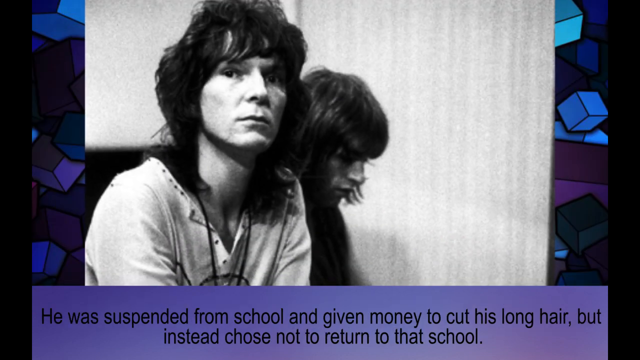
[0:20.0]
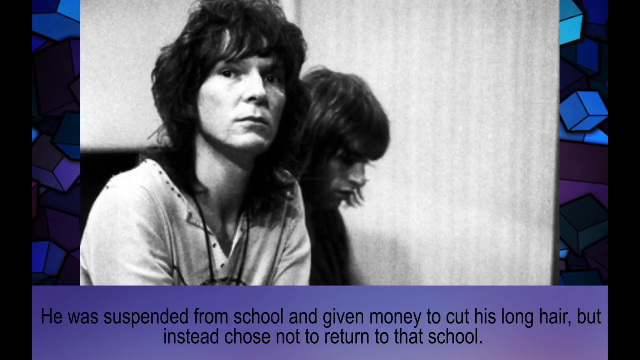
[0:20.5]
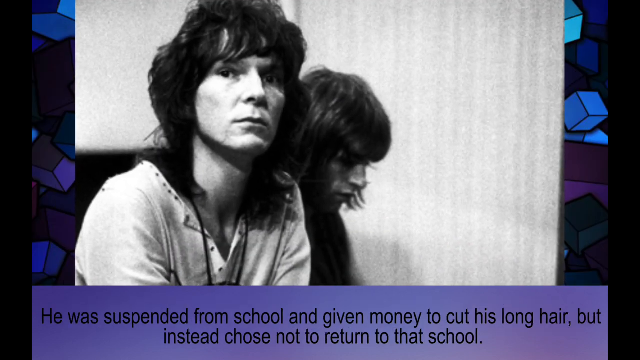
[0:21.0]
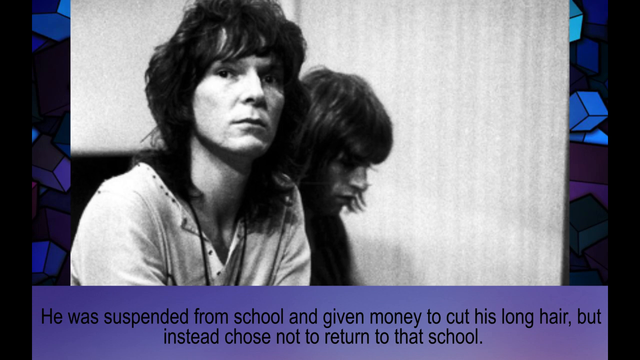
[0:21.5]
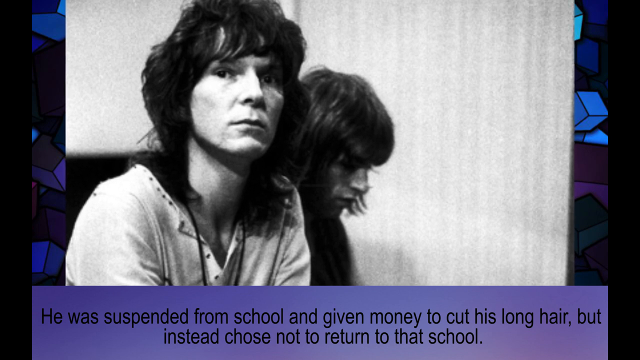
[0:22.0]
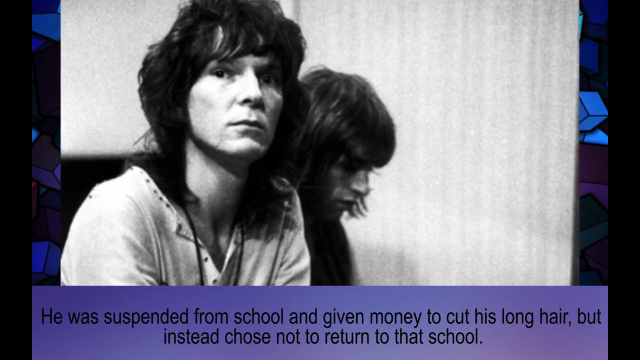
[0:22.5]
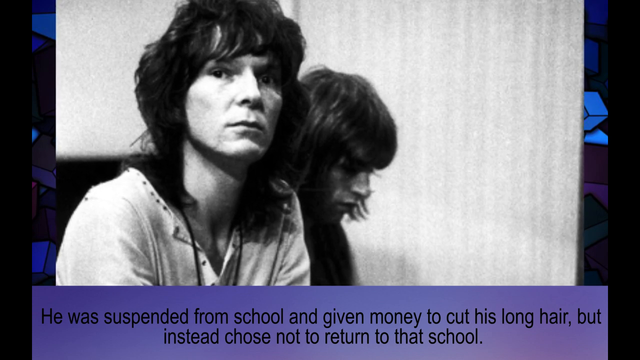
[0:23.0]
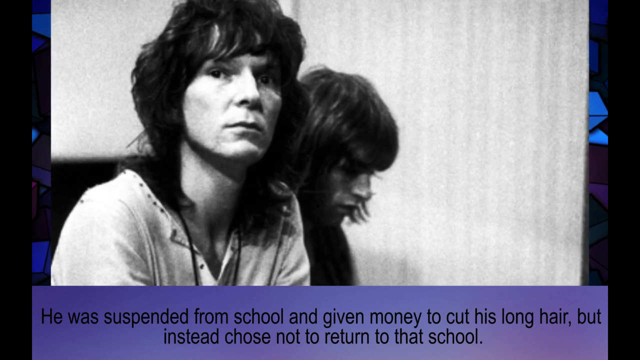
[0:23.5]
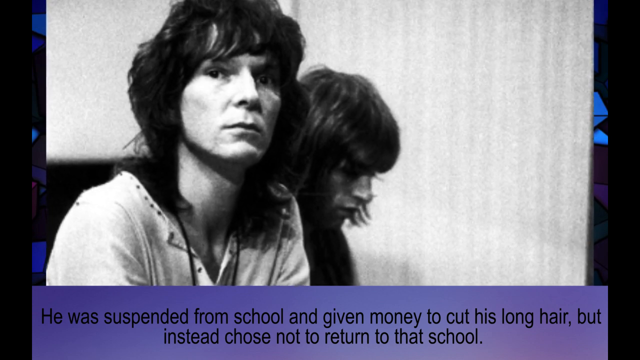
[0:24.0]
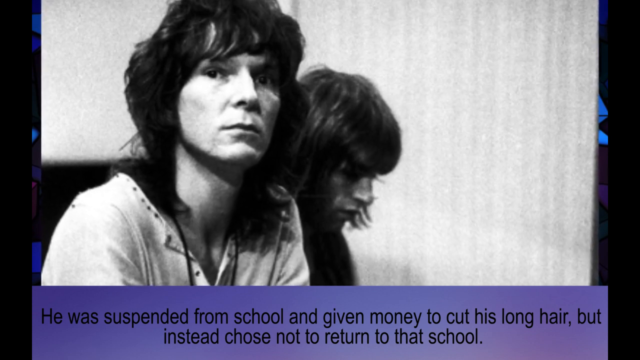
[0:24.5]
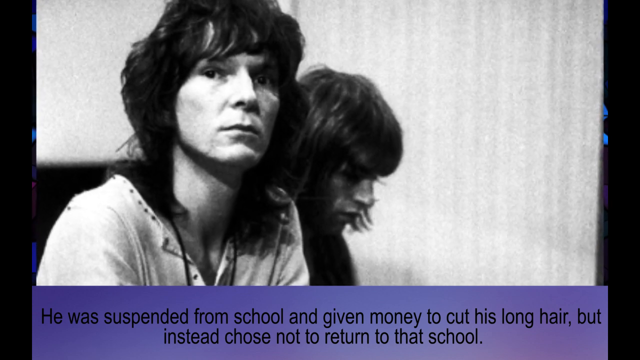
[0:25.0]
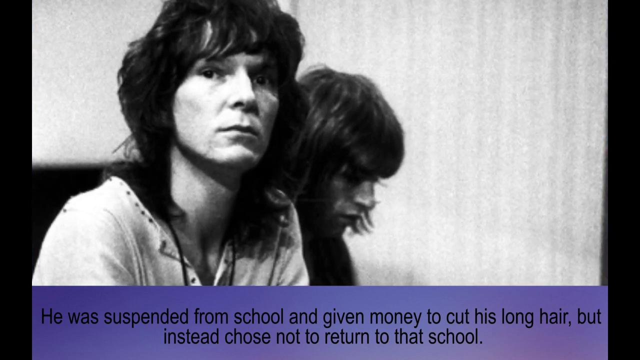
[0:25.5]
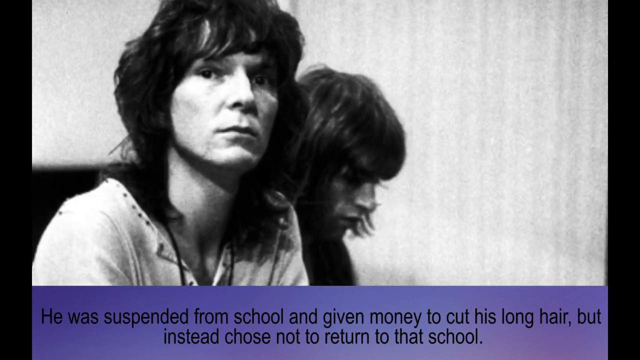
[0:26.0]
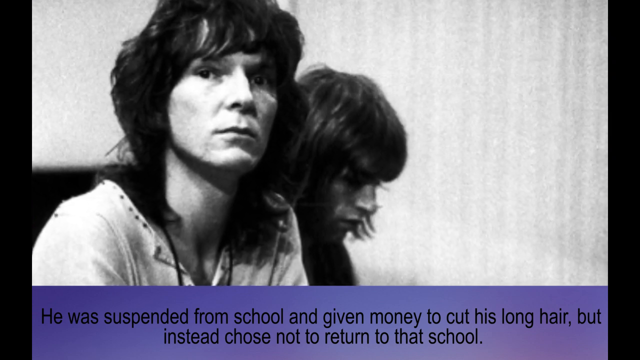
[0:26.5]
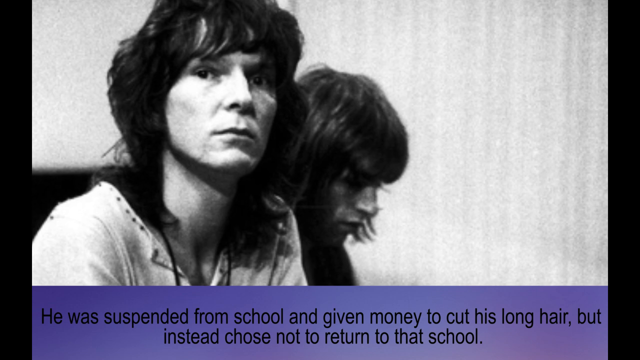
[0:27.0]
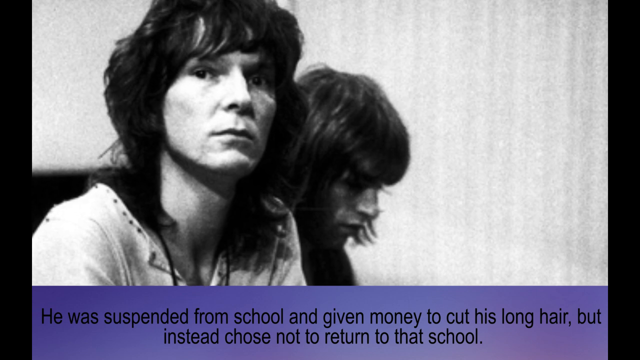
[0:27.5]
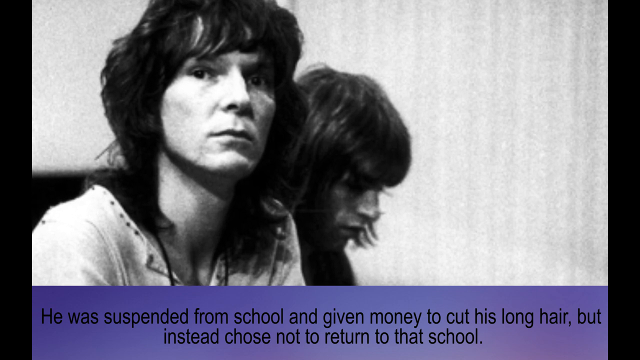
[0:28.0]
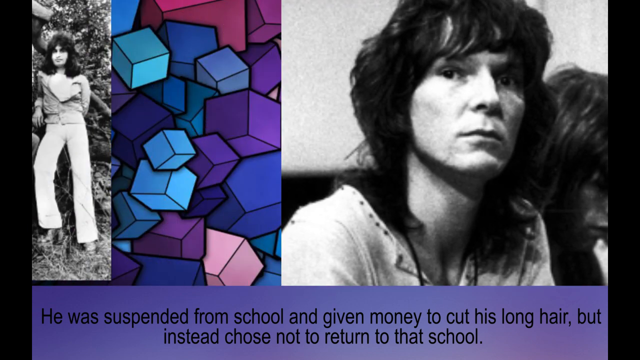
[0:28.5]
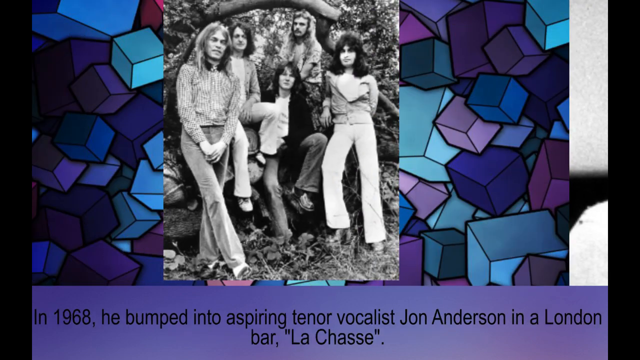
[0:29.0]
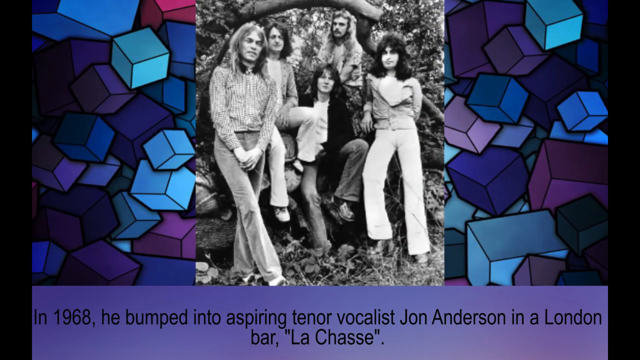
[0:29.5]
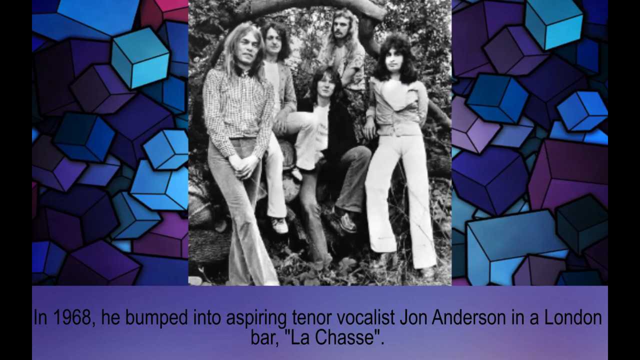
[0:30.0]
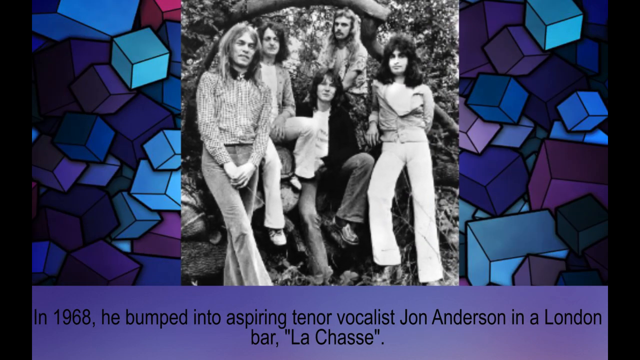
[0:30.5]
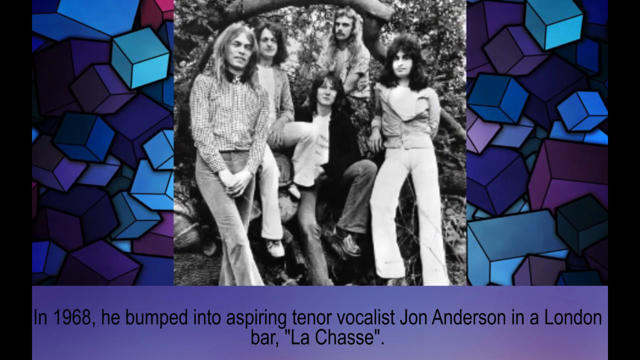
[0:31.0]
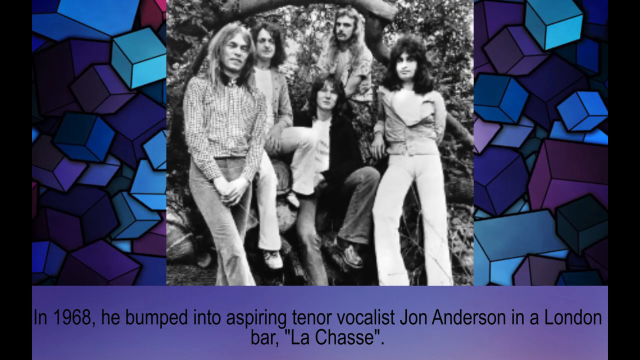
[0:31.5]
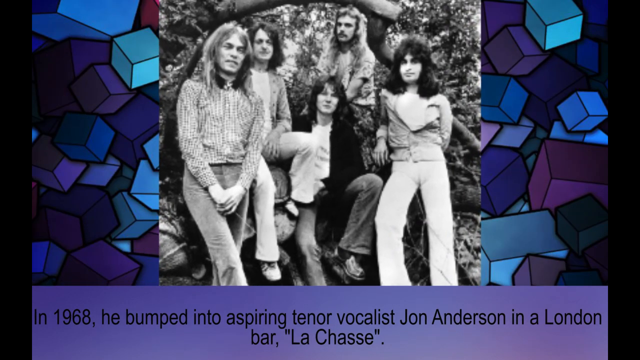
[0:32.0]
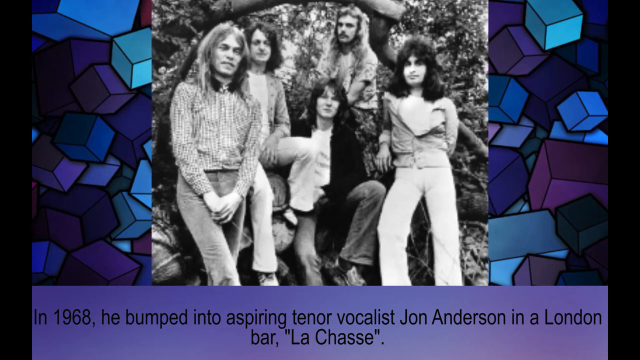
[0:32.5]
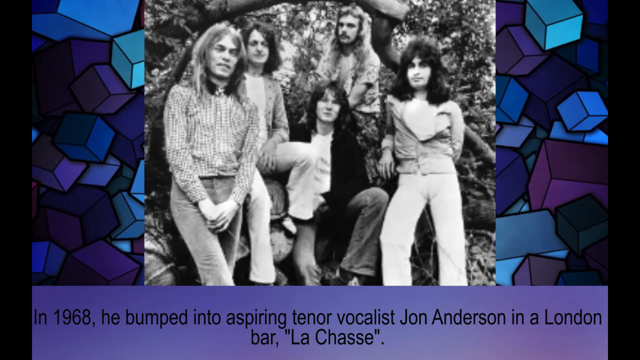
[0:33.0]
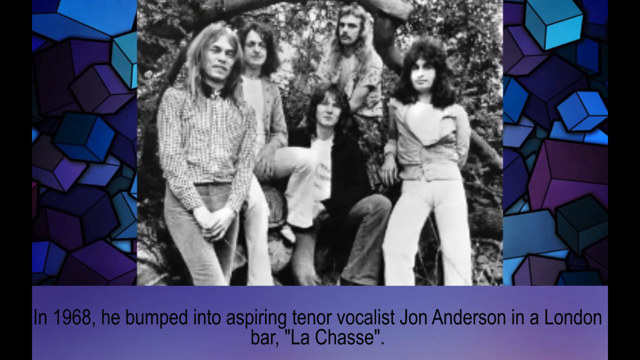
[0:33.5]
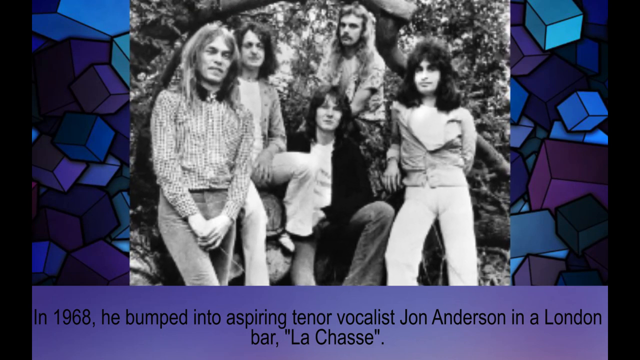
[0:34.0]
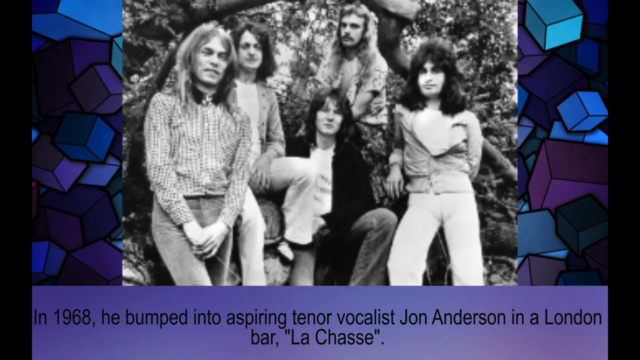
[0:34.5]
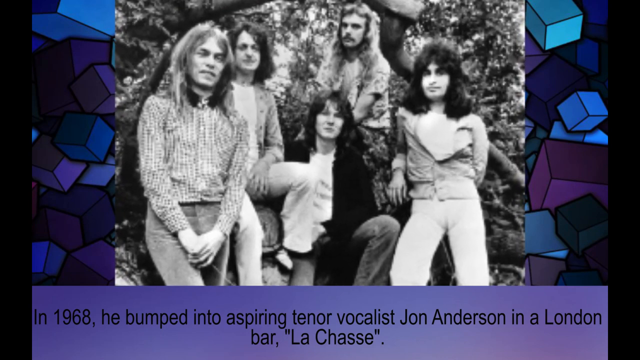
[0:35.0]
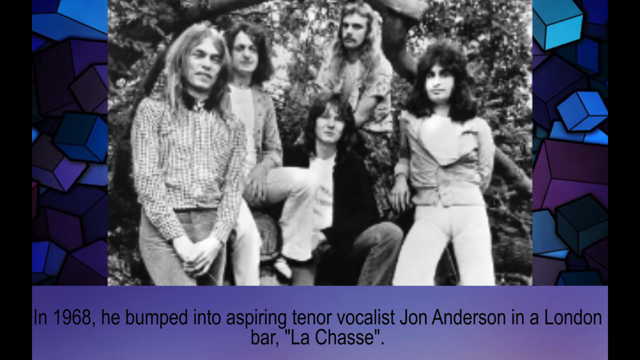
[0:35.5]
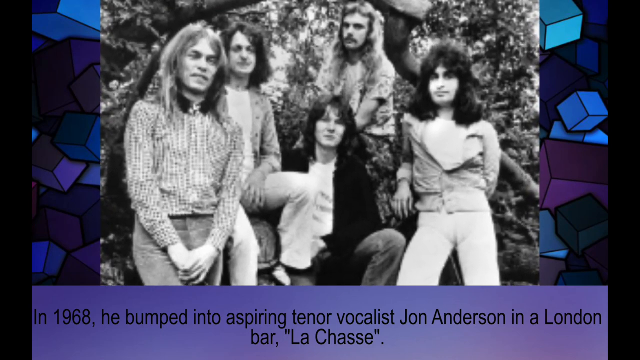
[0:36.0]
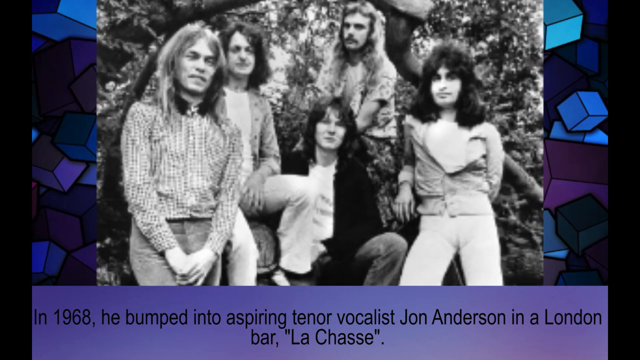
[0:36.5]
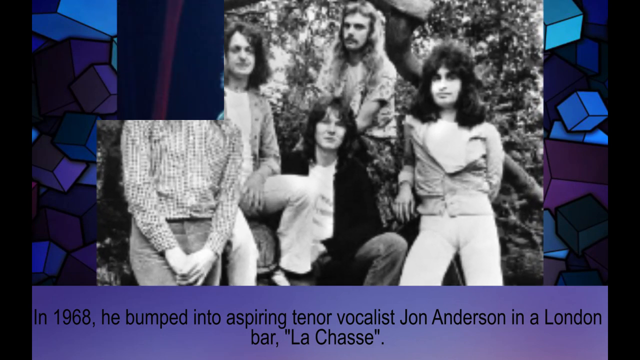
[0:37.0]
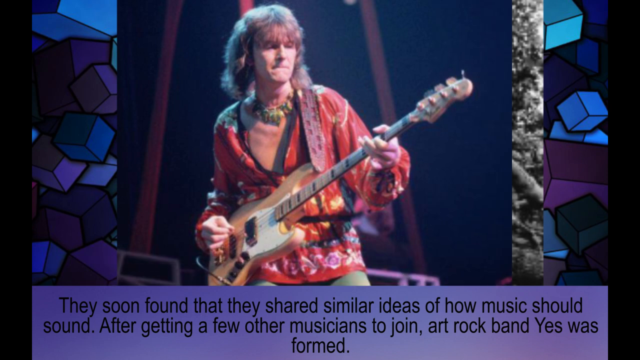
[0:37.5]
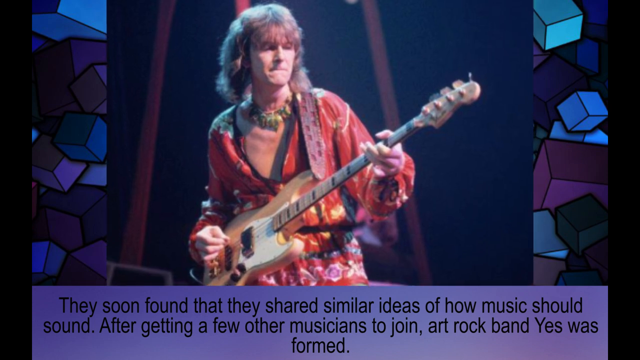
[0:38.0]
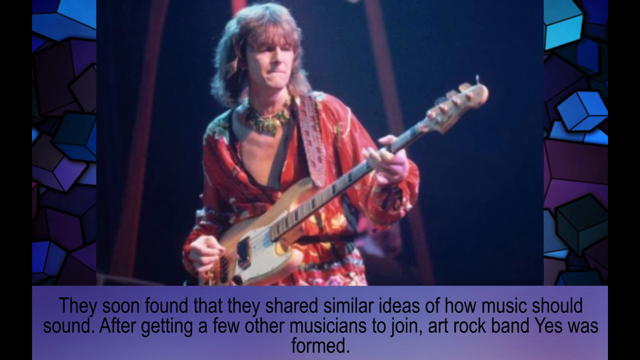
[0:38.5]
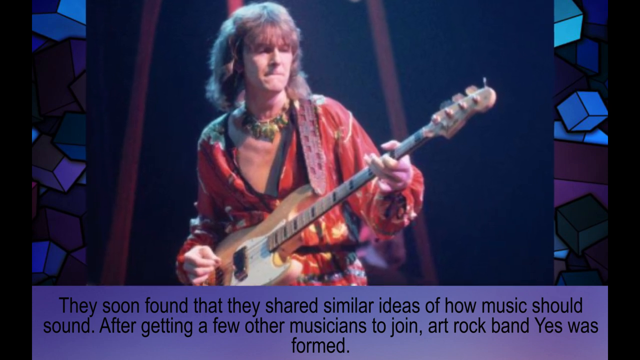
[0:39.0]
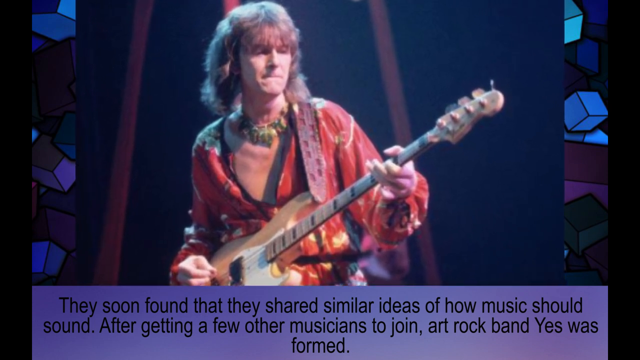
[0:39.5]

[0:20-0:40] A musician sits in a studio, staring at the camera as his picture is taken, in a series of still images. Text underneath states that he was suspended from high school and given money to cut his long hair, but instead chose not to return to that school. Next comes an image of him with one of the bands he was in, with text at the bottom of the screen reading: "in 1968, he bumped into aspiring tenor vocalist John Anderson in a London bar, La Chasse." The video then changes to show him on stage playing a guitar, with text reading: "they soon found that they shared similar ideas of how music should sound. After getting a few other musicians to join, art rock band Yes was formed."